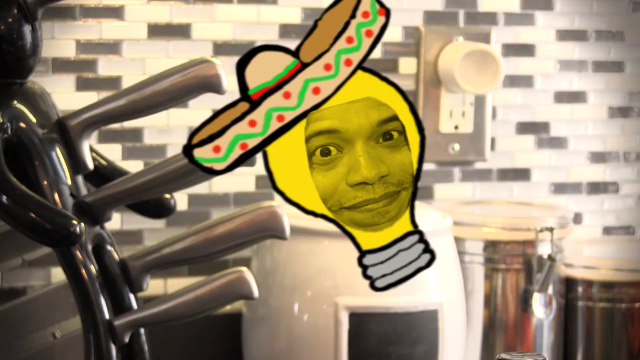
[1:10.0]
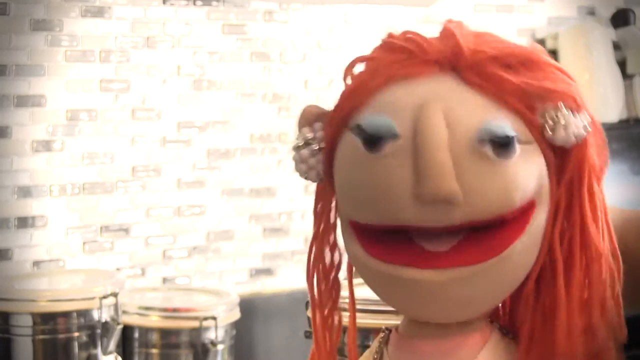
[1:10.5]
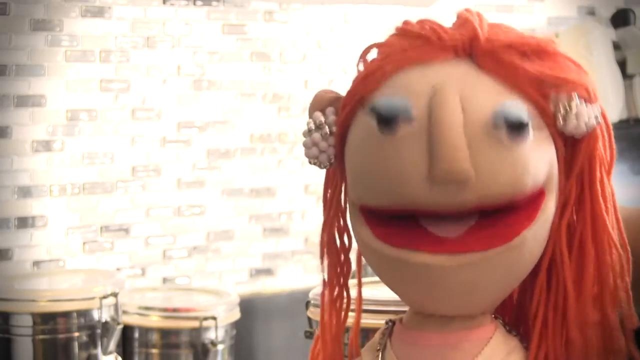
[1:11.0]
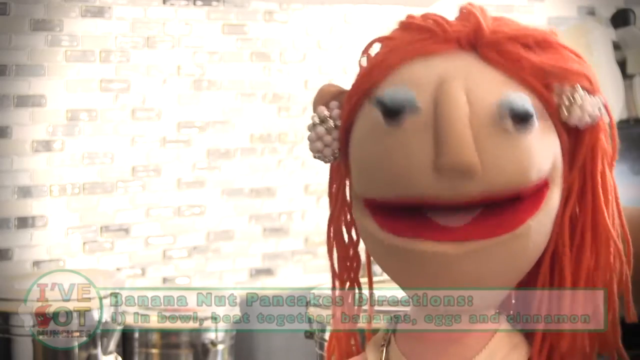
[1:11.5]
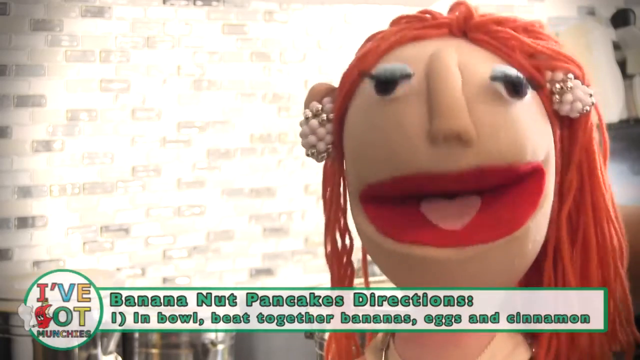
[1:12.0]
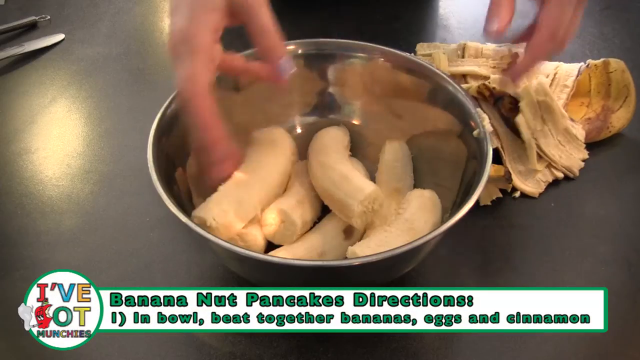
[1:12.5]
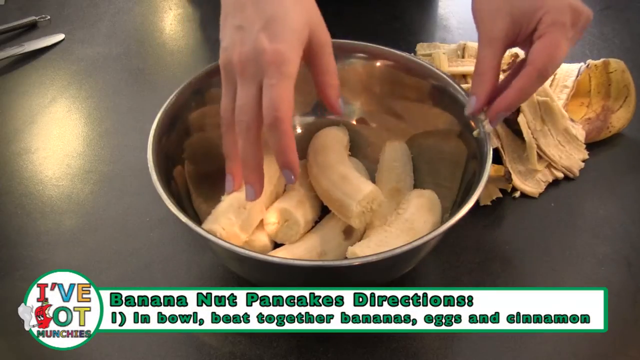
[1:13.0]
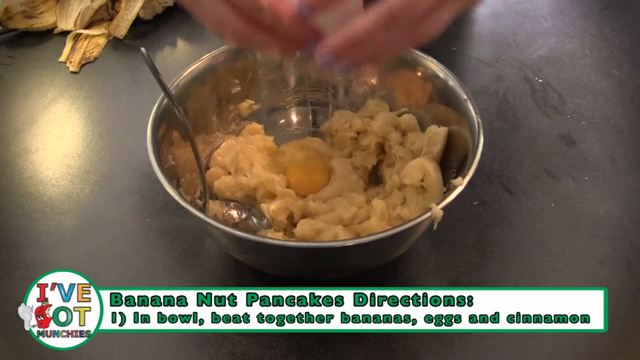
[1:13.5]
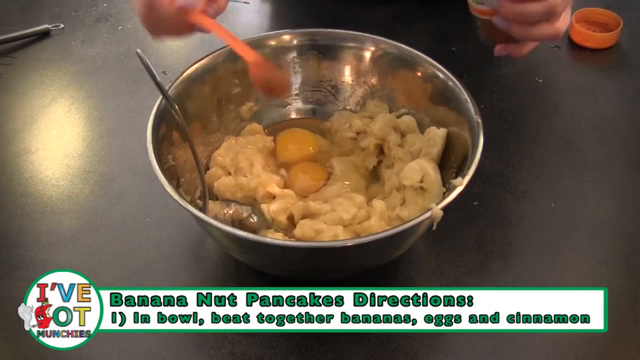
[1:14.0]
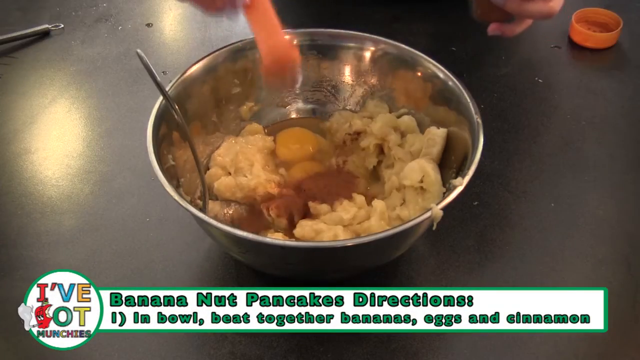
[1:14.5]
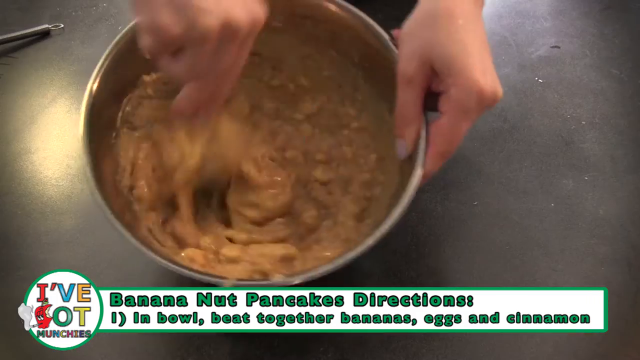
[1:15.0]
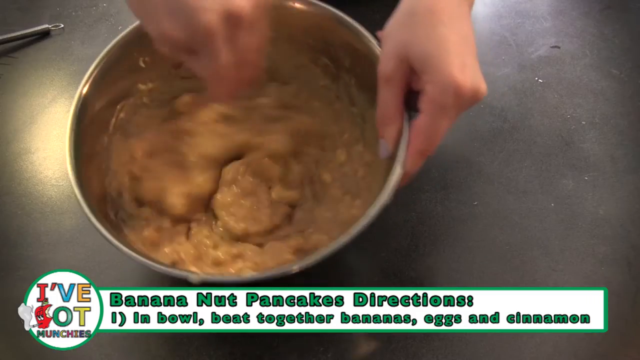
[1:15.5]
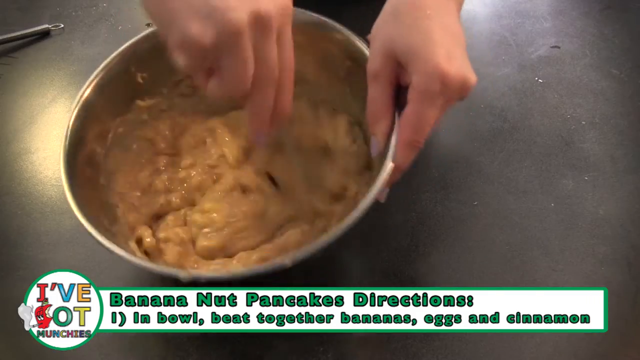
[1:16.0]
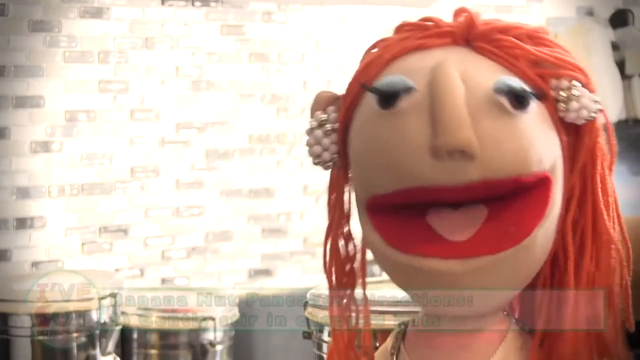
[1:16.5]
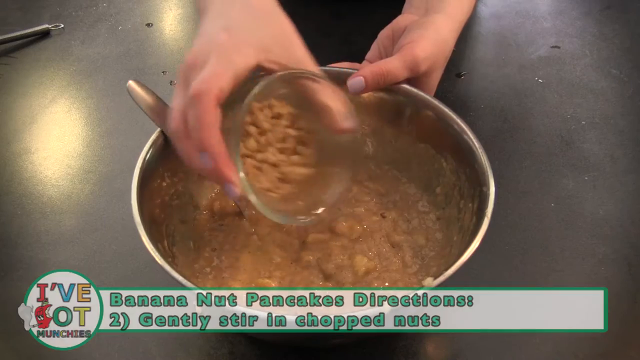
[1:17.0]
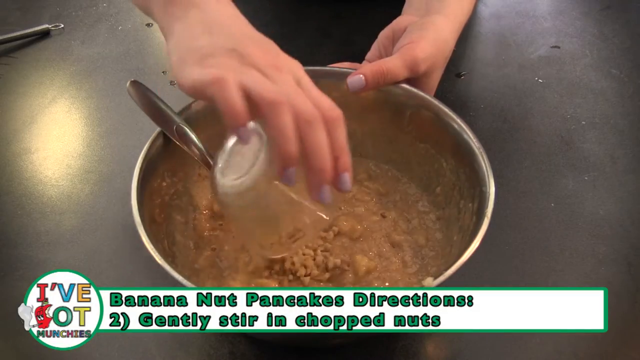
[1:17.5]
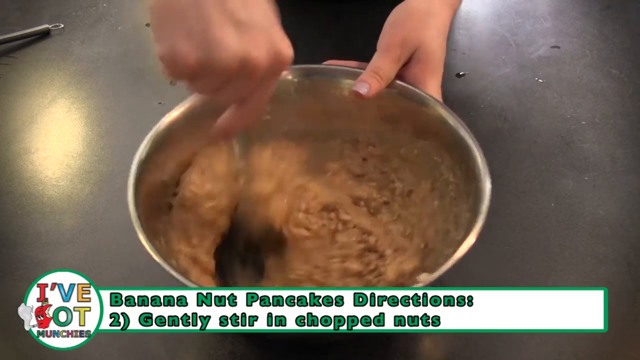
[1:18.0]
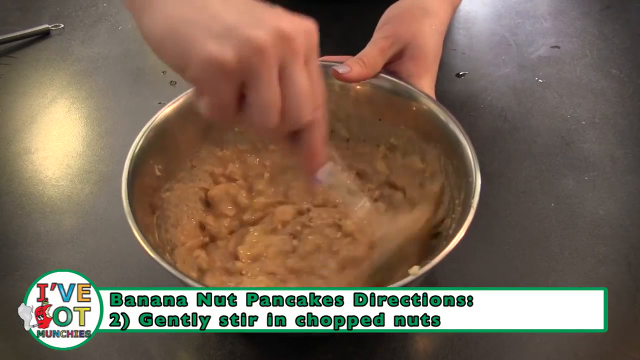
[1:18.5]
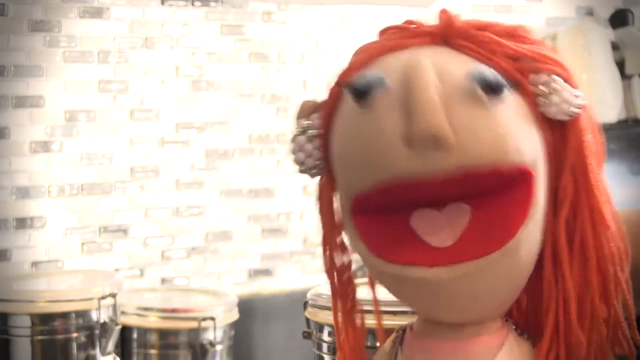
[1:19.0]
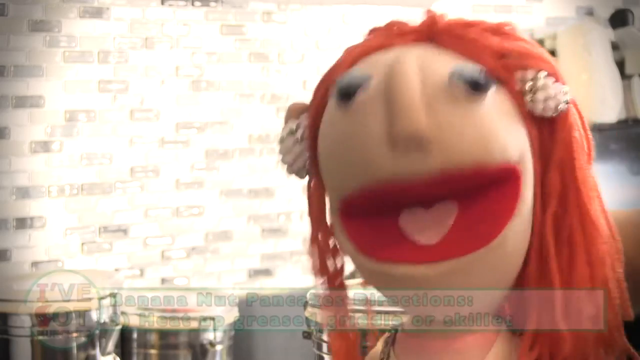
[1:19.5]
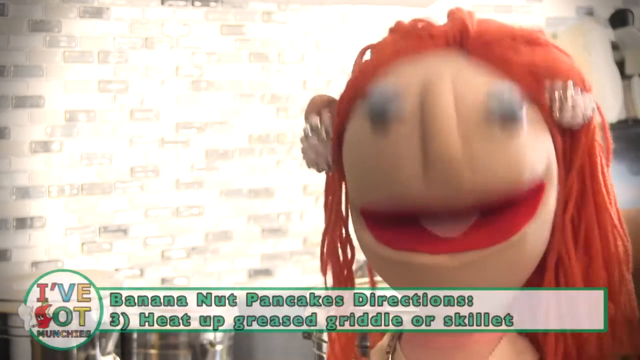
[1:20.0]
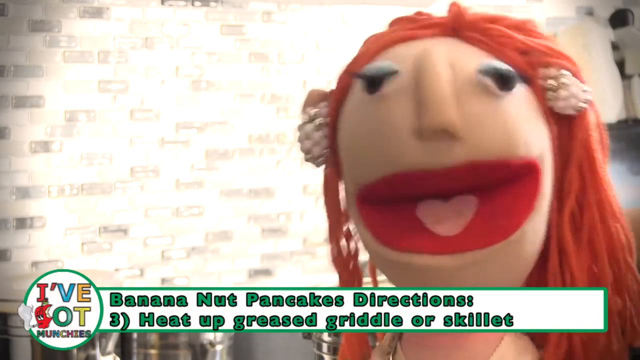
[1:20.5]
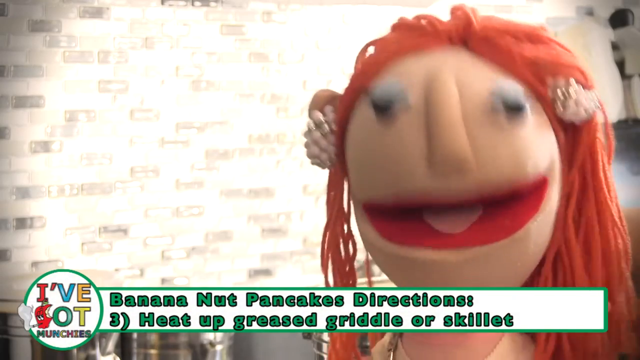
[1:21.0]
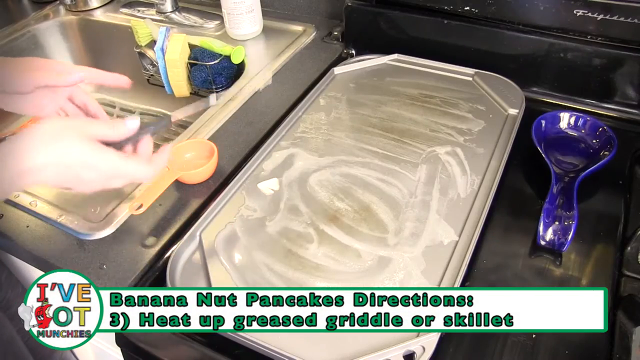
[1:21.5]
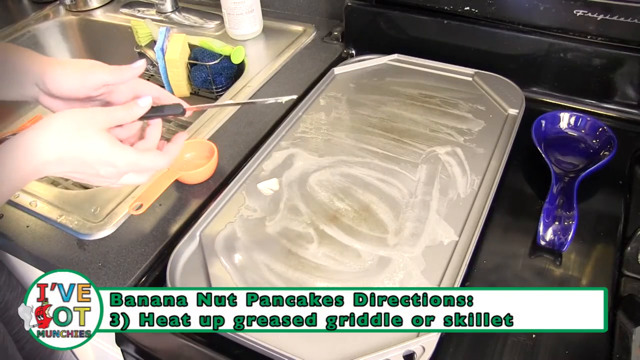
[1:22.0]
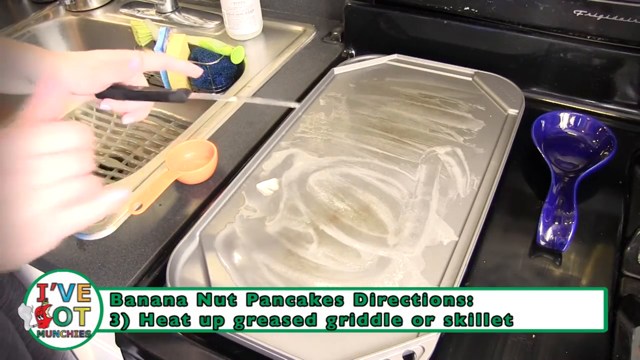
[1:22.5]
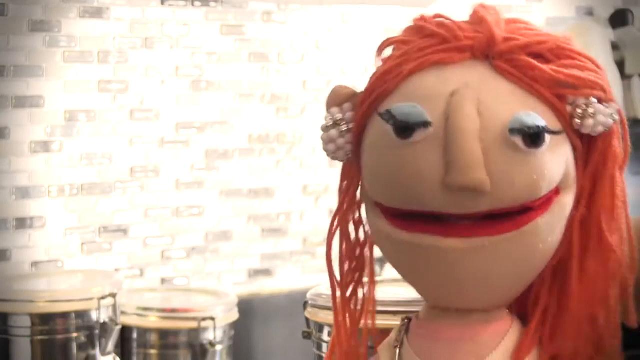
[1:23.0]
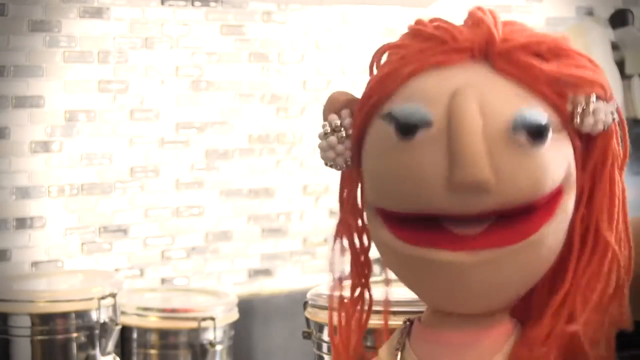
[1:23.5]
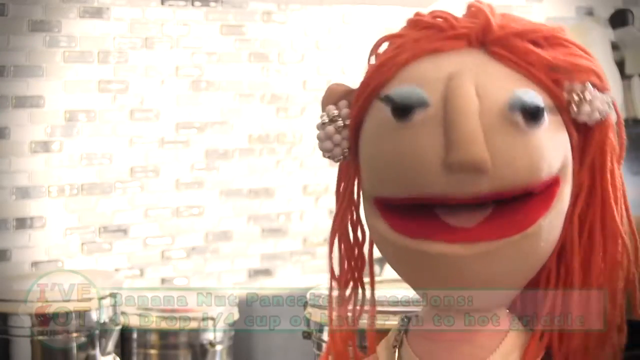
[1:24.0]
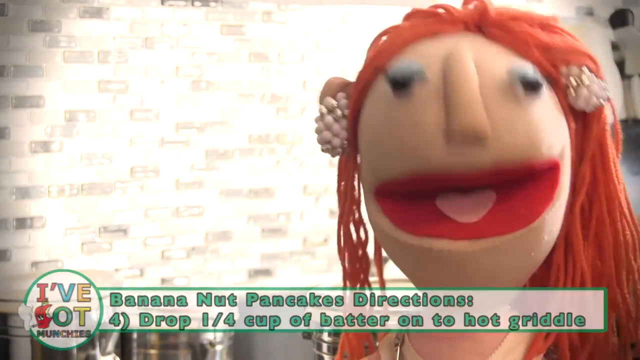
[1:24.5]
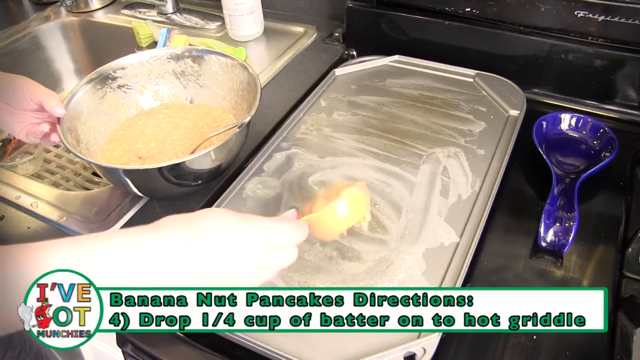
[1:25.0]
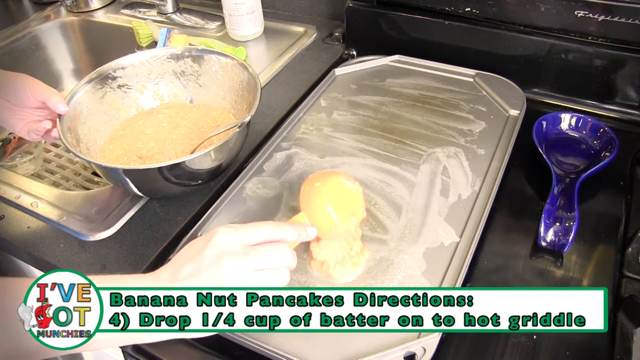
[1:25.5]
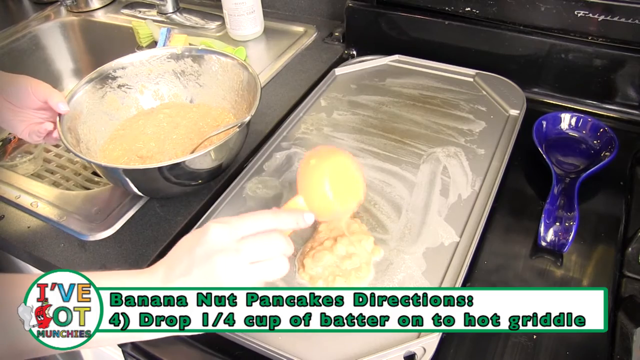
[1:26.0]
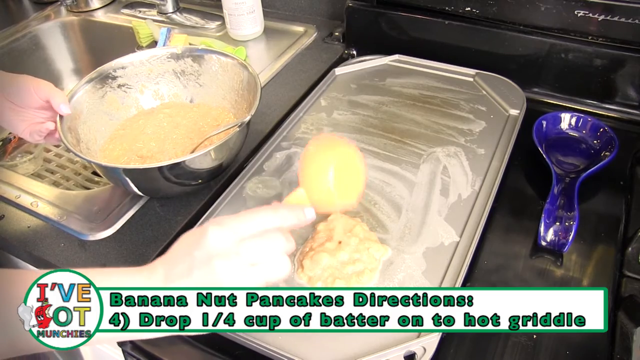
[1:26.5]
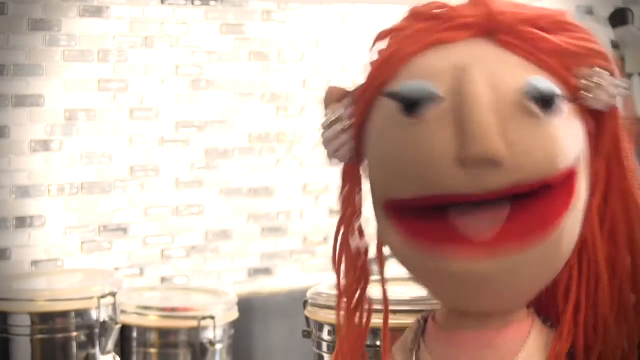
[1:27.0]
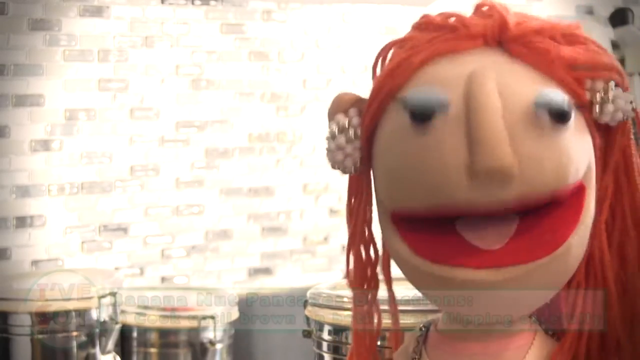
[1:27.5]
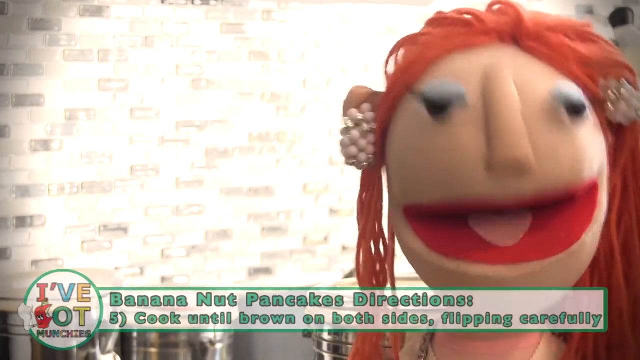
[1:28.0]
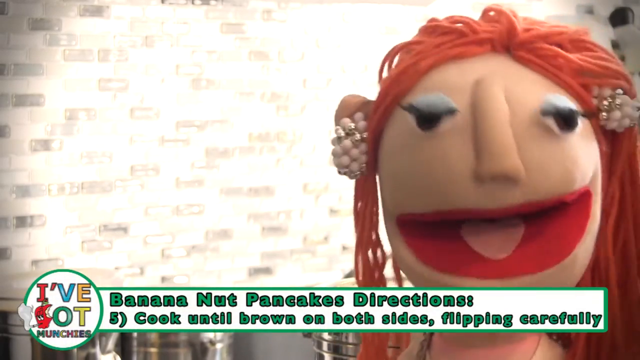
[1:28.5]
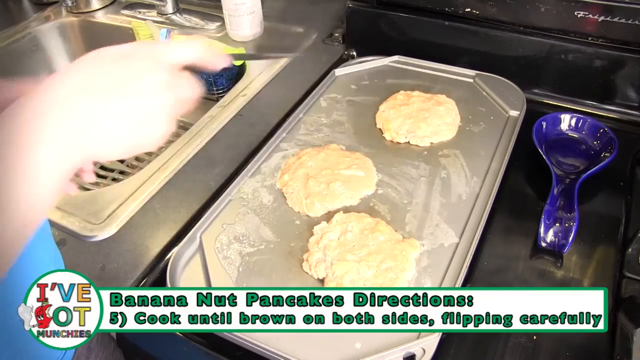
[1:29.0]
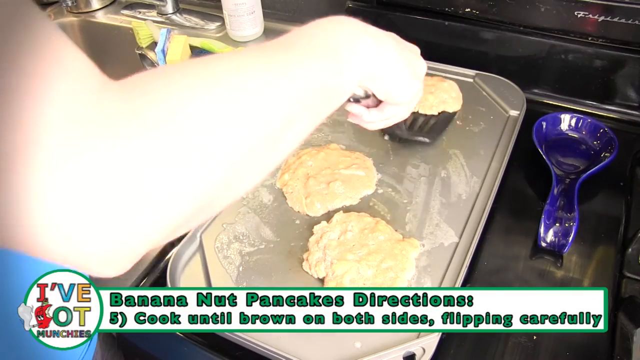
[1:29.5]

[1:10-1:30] The light bulb with a man's face appears. Then the puppet is shown: it has a kind of long face, a pale complexion, a red mouth, a pink tongue and what is kind of yarn hair, which is orange. Someone puts bananas in a mixing bowl, adds the two eggs and then the cinnamon, and mixes and stirs it. They add the chopped nuts and the other ingredients. They heat up the griddle and drop the batter onto it. Text reads "cook on both sides", and they flip the pancakes on the griddle. The steps show up at the bottom of the screen, and the puppet seems to be relaying the steps while someone follows them and makes the banana nut pancakes on the griddle.